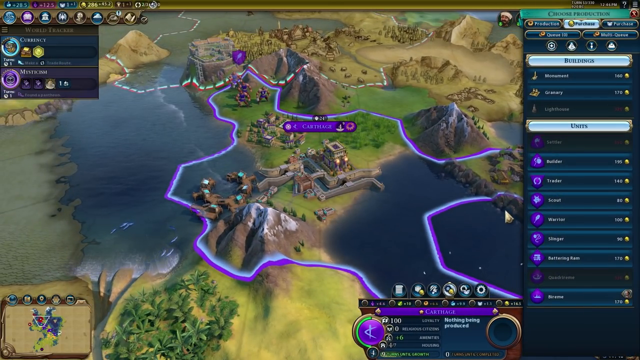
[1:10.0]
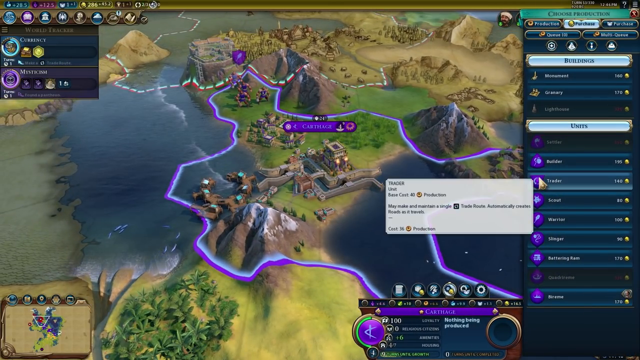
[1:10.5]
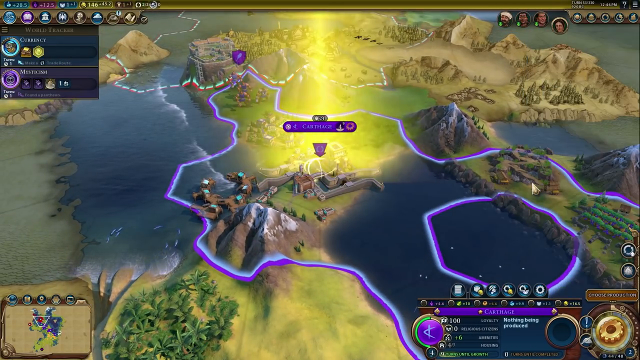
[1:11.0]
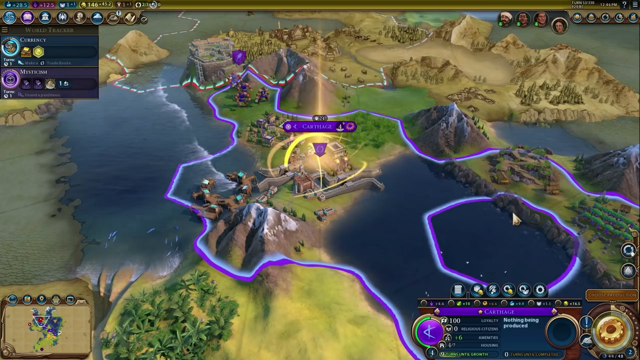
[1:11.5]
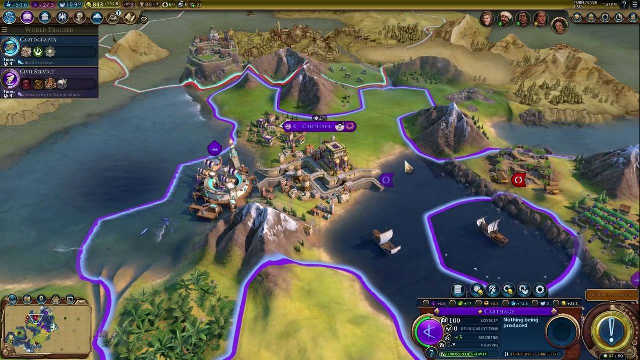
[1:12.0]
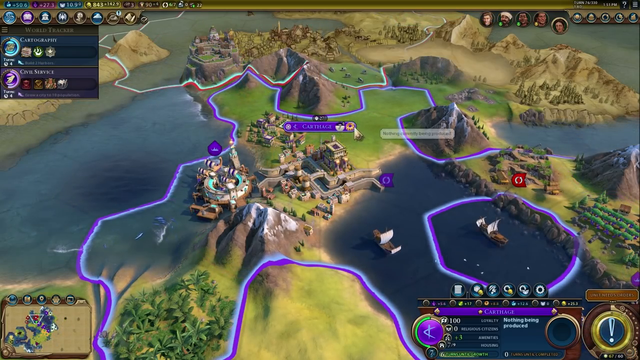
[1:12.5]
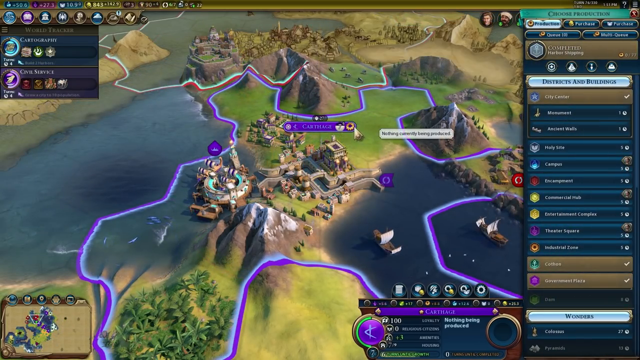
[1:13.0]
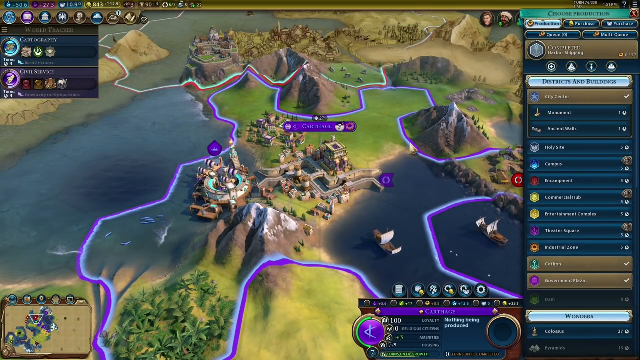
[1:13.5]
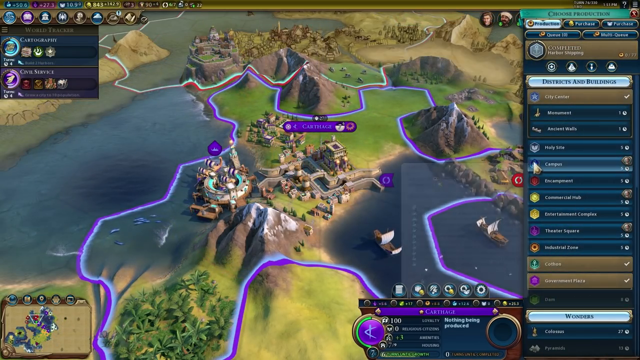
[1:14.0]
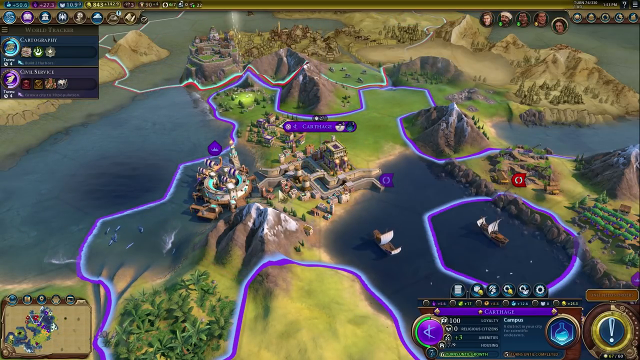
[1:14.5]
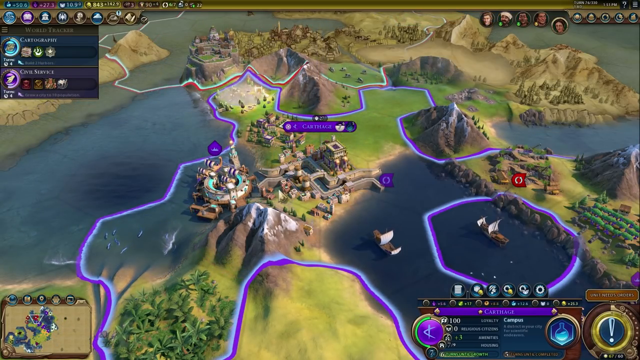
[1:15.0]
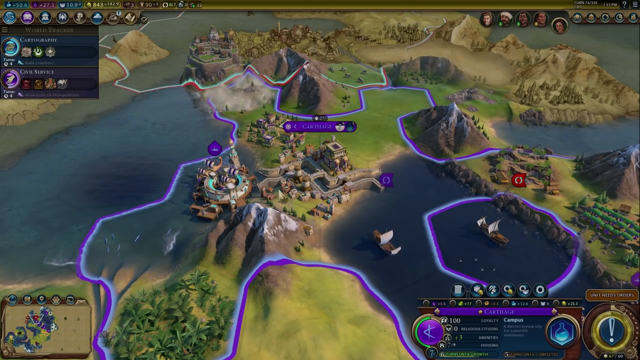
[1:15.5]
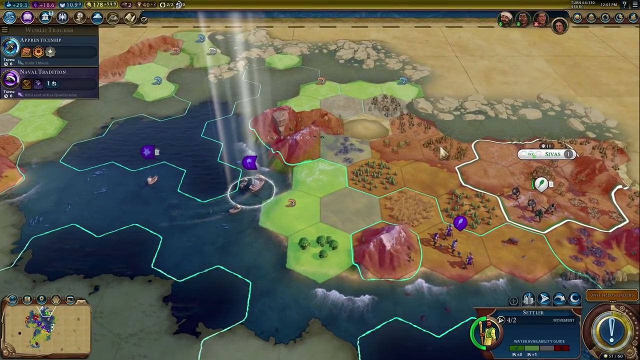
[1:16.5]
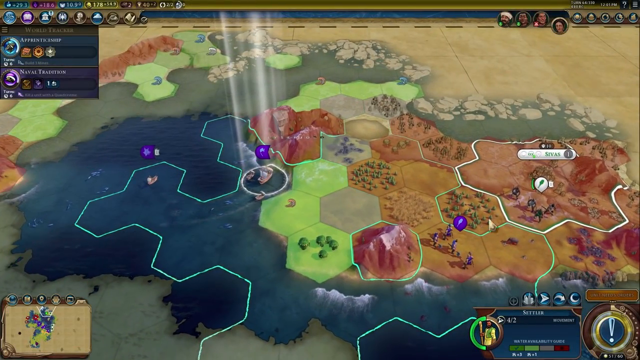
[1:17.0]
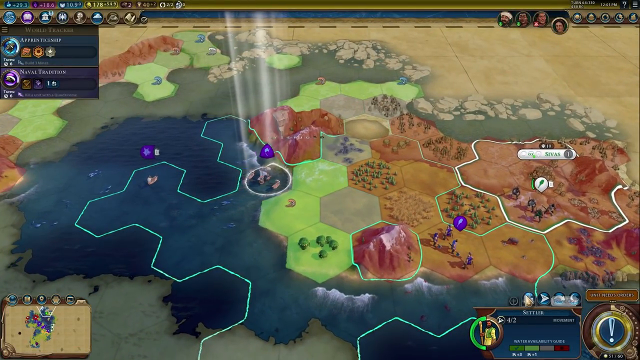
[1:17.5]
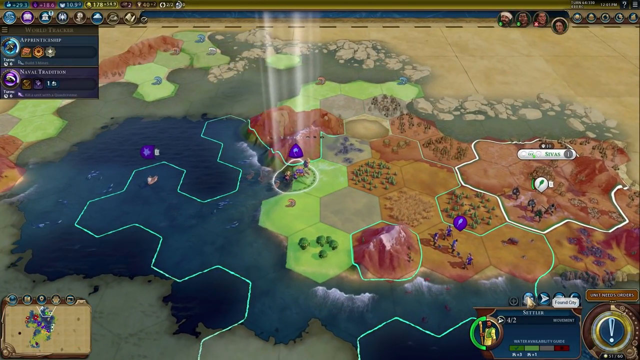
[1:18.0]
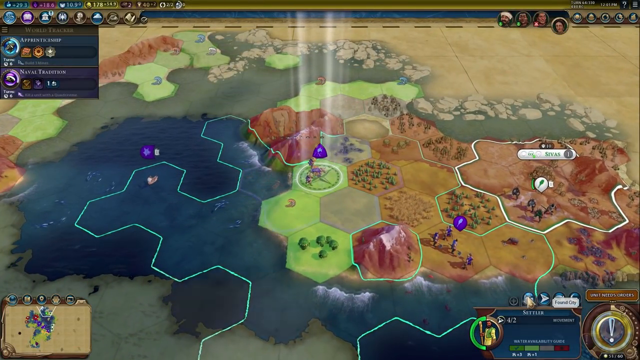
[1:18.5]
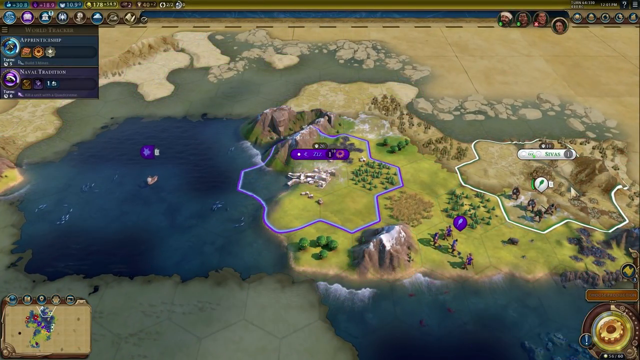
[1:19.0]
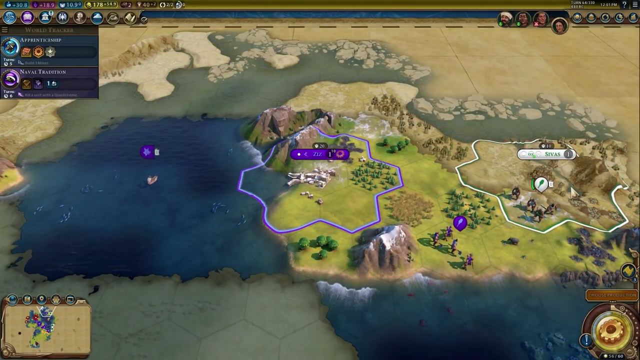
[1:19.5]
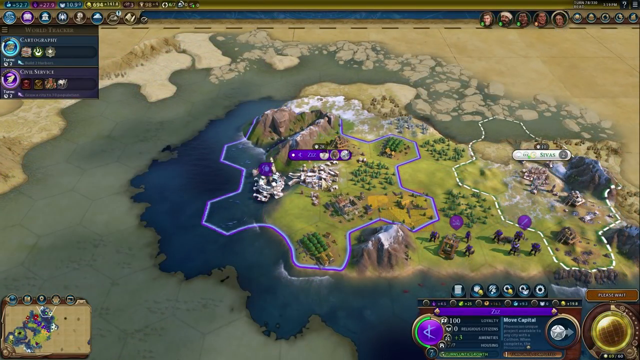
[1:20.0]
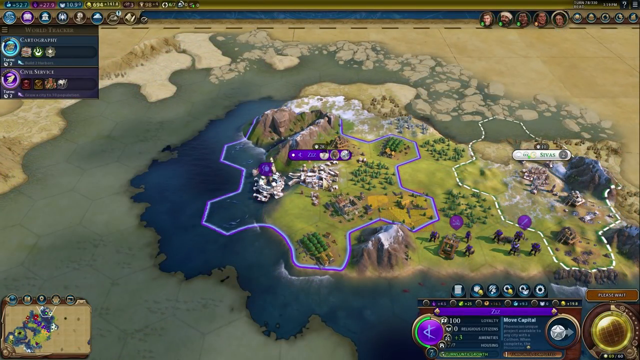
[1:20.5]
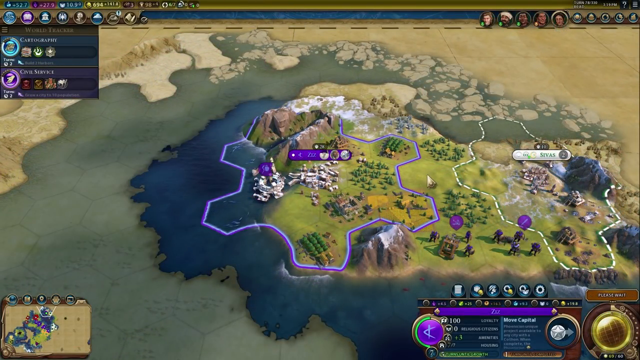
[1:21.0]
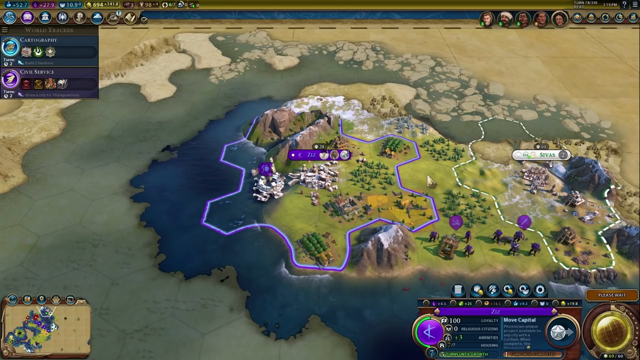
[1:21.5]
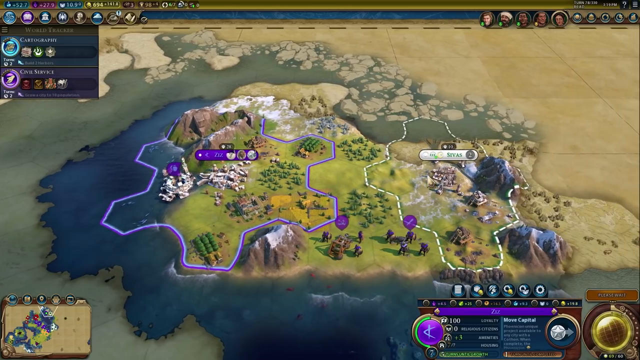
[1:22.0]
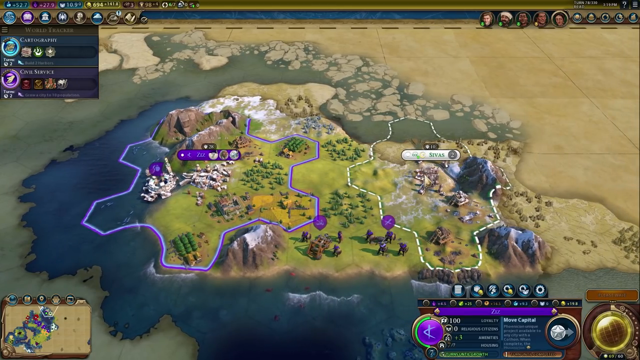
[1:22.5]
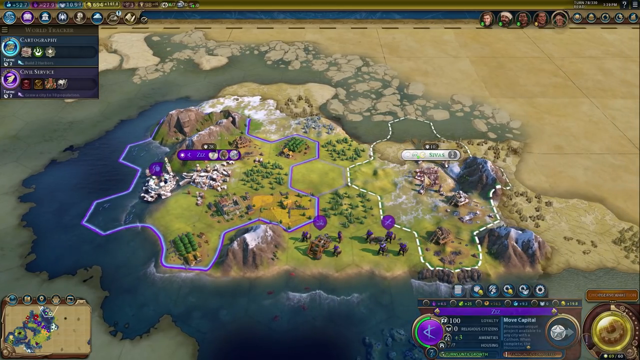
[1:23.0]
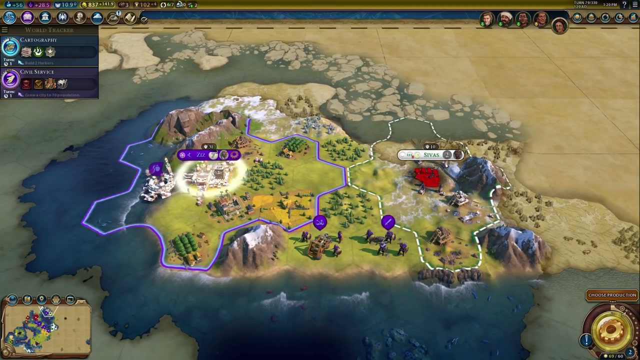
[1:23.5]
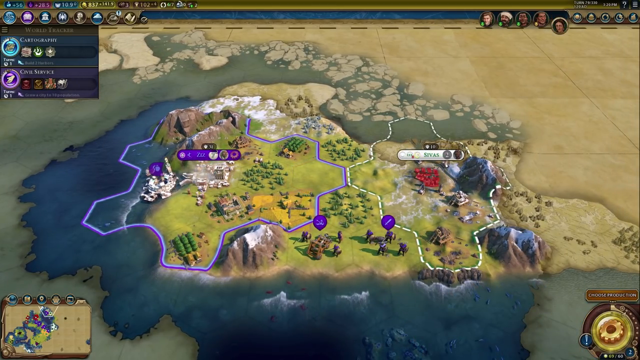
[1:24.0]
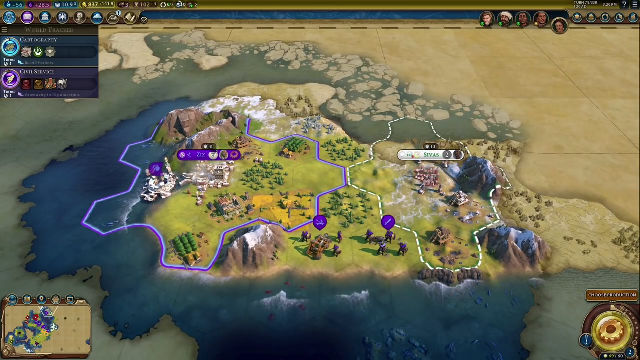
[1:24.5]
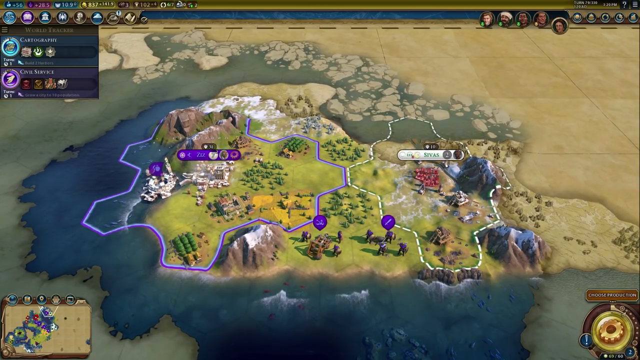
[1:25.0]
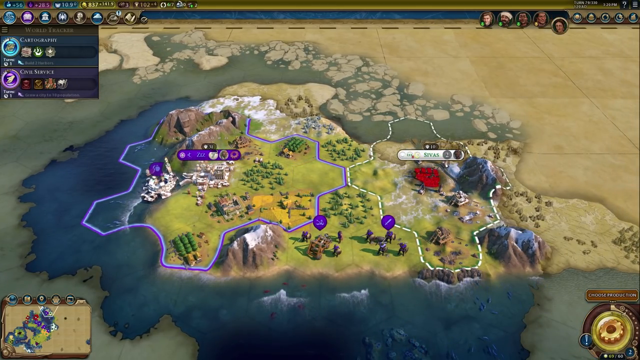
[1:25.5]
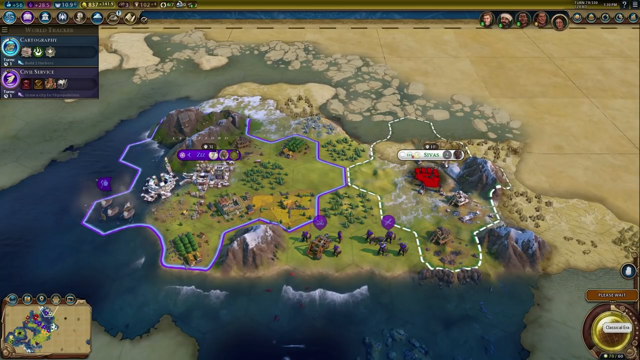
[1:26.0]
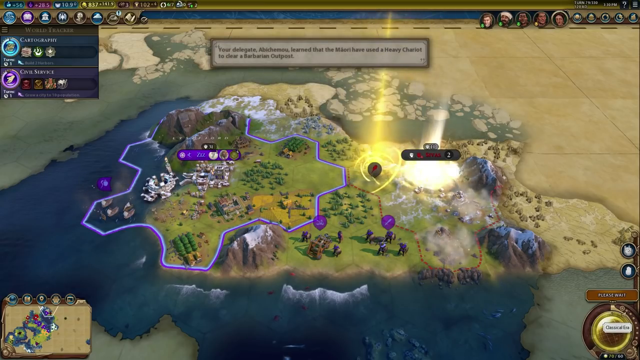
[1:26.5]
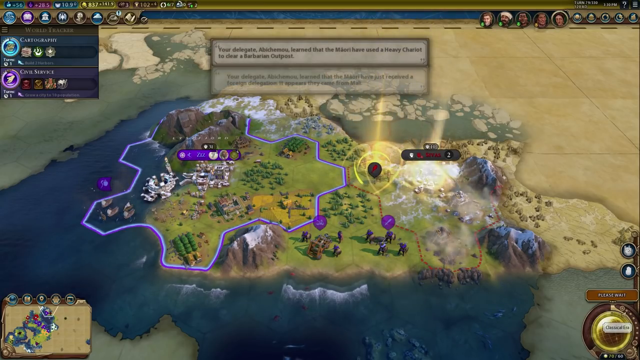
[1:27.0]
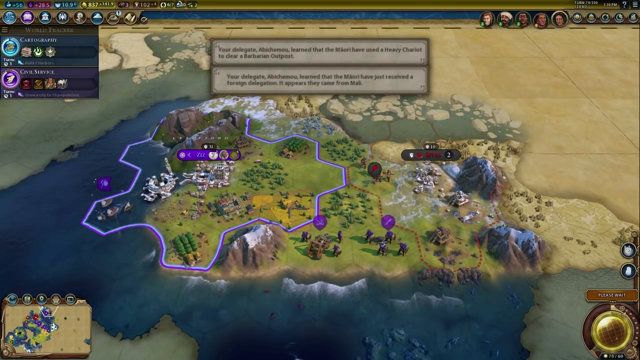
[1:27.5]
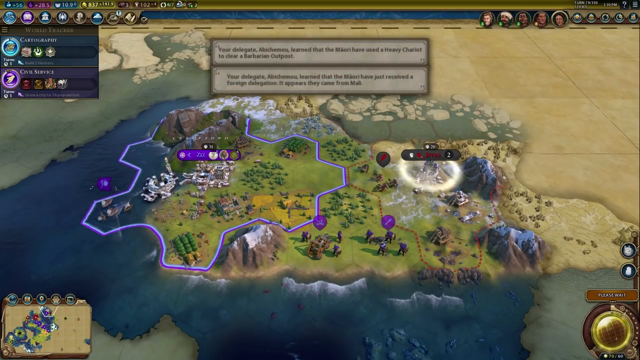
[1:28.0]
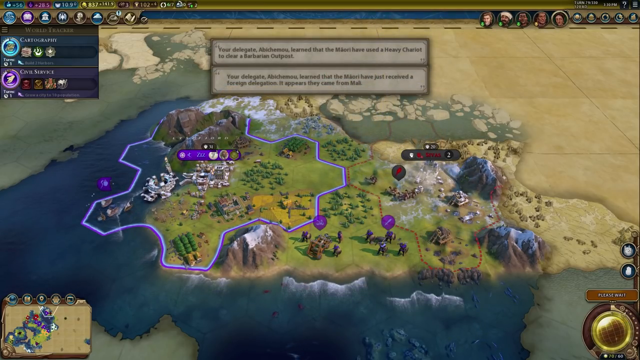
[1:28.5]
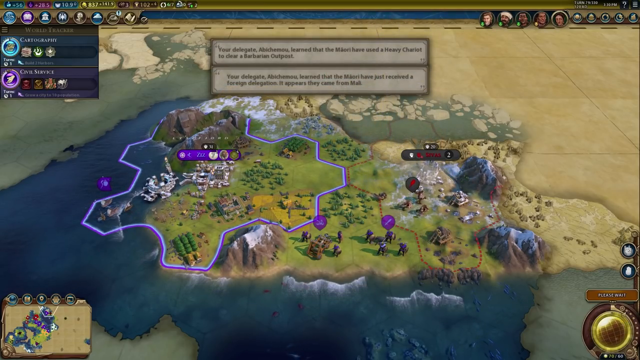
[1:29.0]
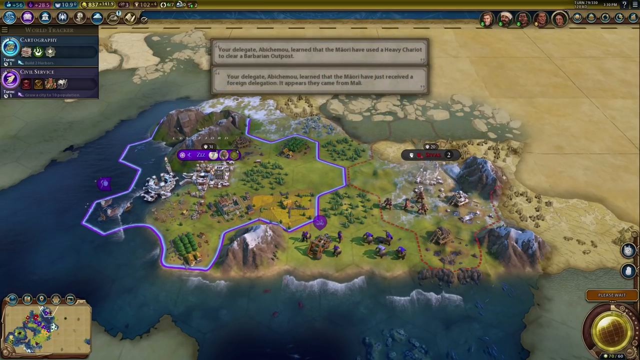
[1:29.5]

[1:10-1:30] The game continues, with a lot of the map highlighted in purple; it is unclear whether this marks the developed area or the boundaries of where the user can work. The cursor moves around, and a somewhat different view of the map appears, with a sort of hexagon grid pattern. Different items appear to be dragged and dropped onto different sections of the map. Some of them move around, and small characters that look like people or animated humans move within the game, possibly being sent to develop a particular piece of the map. The edges of the map are visible, with some sections that look like the end of that world.